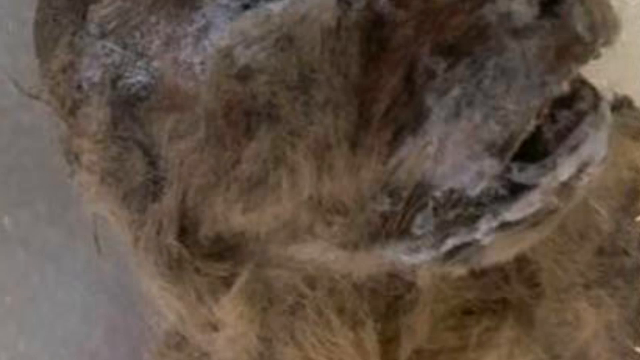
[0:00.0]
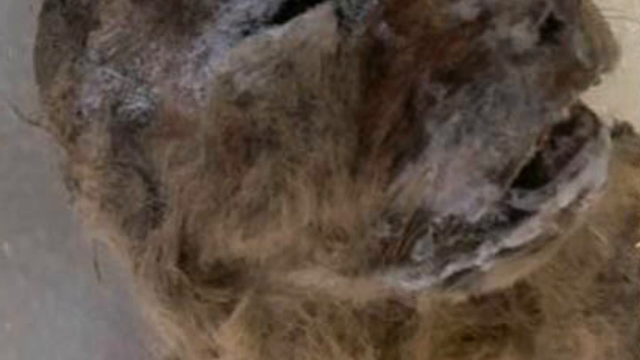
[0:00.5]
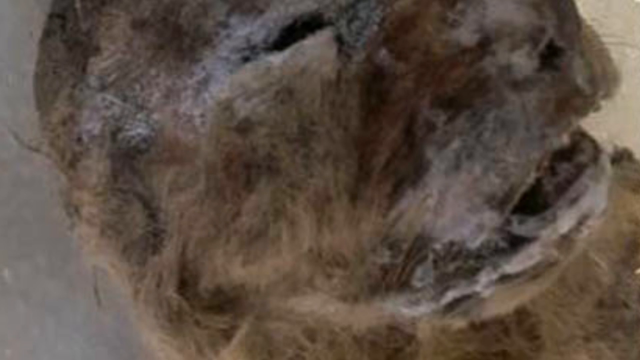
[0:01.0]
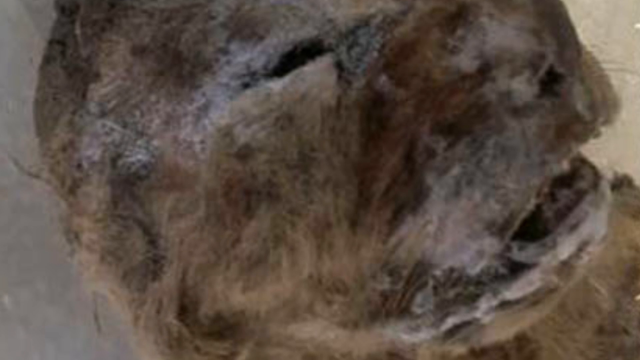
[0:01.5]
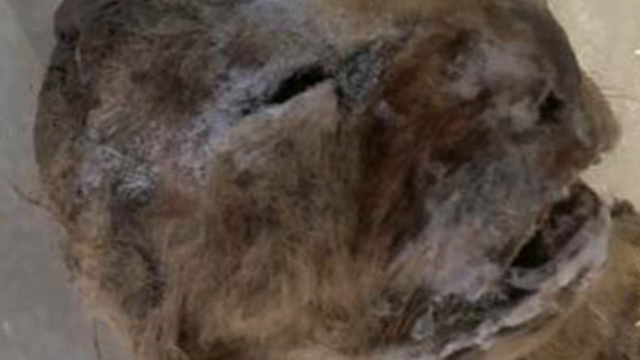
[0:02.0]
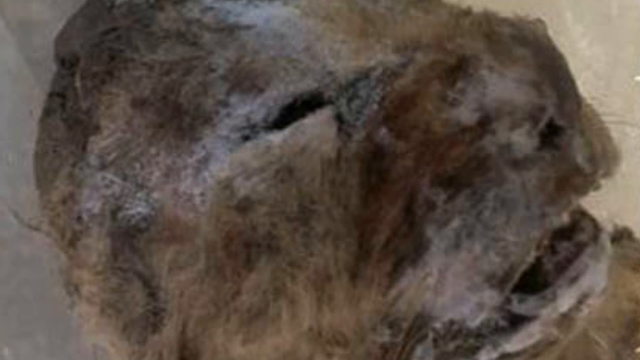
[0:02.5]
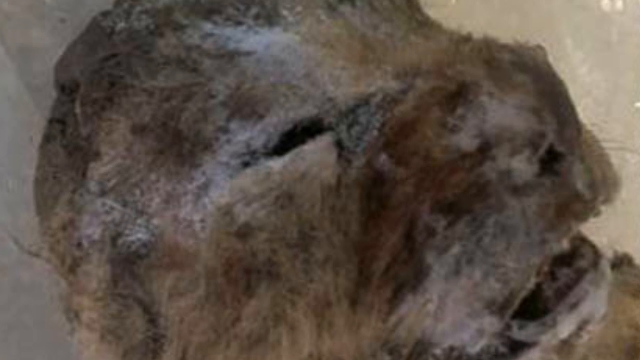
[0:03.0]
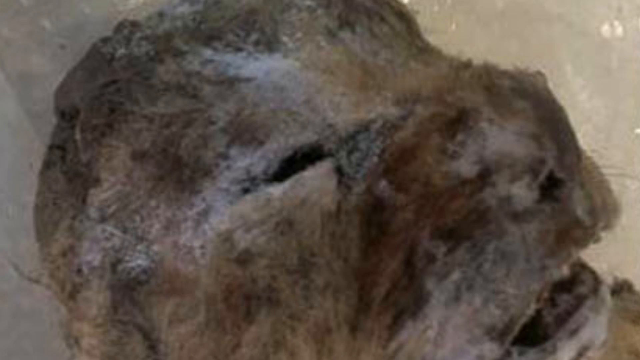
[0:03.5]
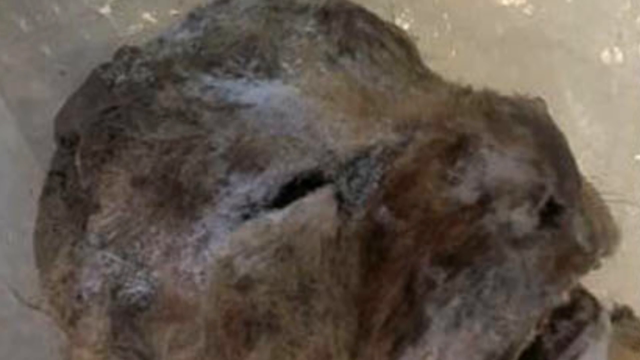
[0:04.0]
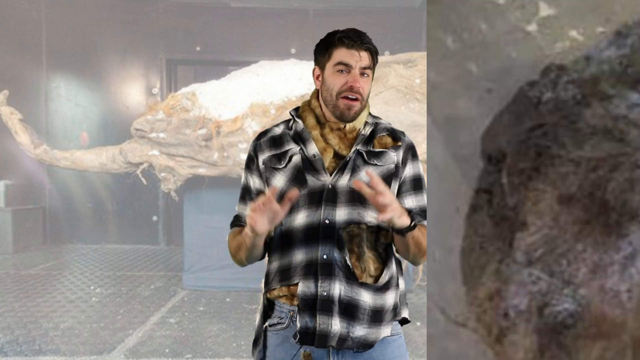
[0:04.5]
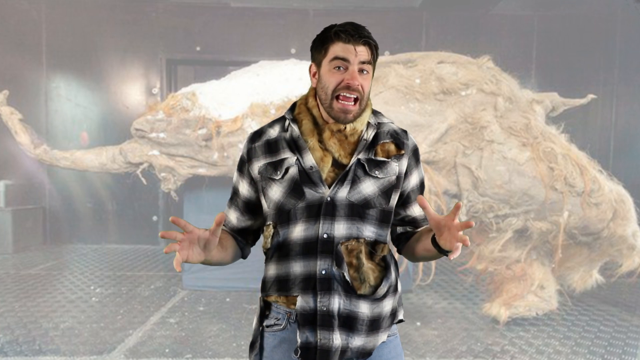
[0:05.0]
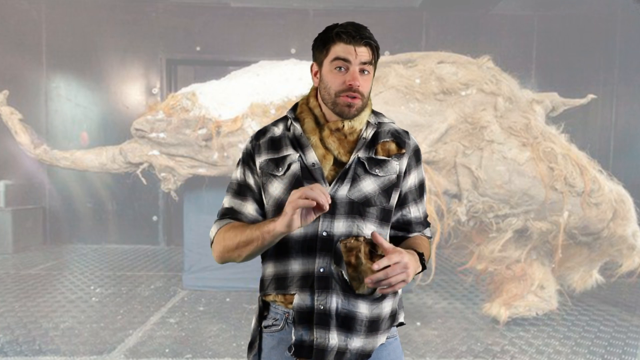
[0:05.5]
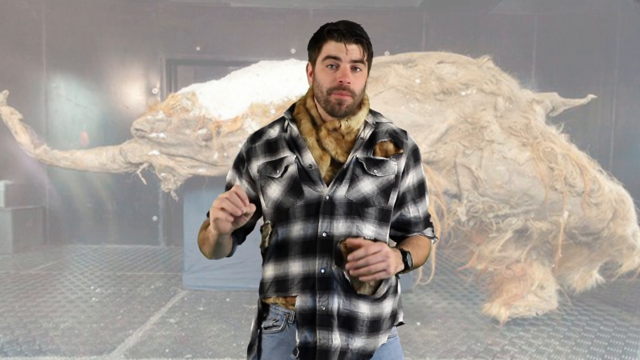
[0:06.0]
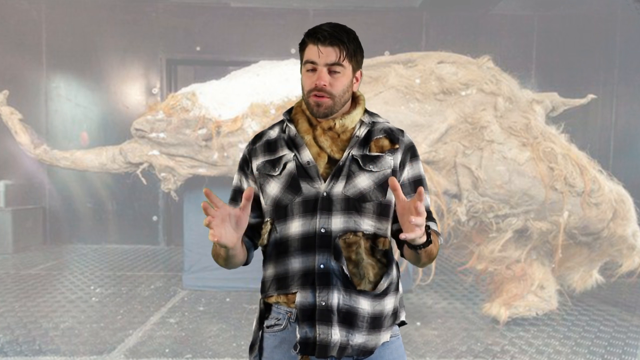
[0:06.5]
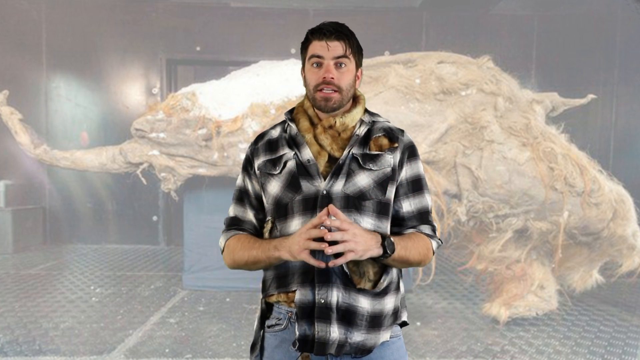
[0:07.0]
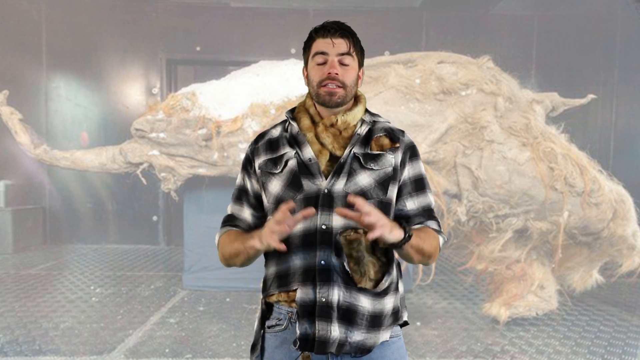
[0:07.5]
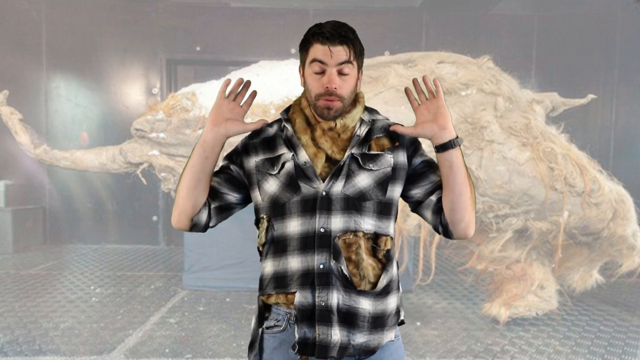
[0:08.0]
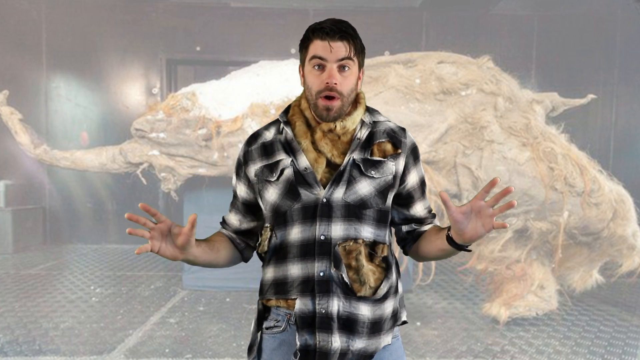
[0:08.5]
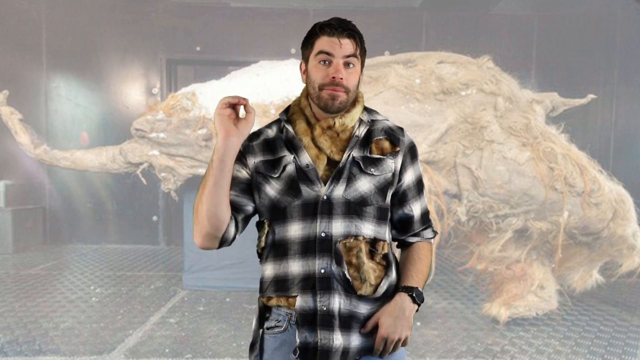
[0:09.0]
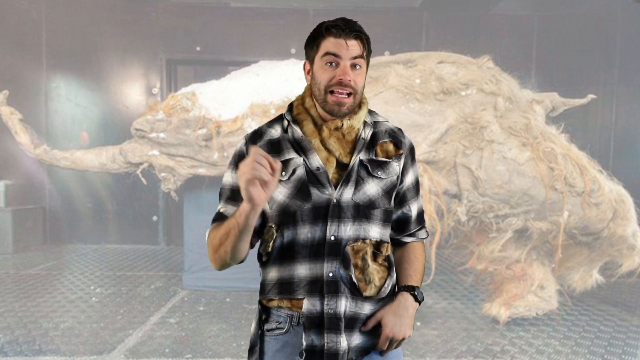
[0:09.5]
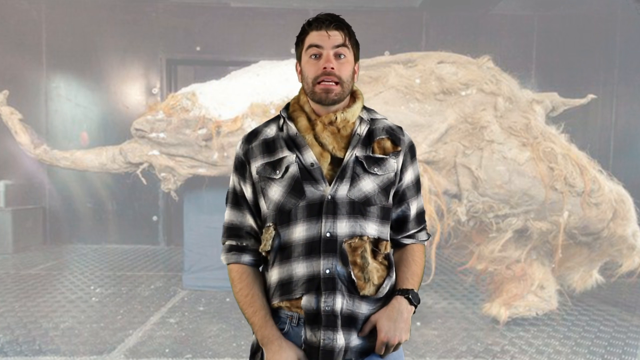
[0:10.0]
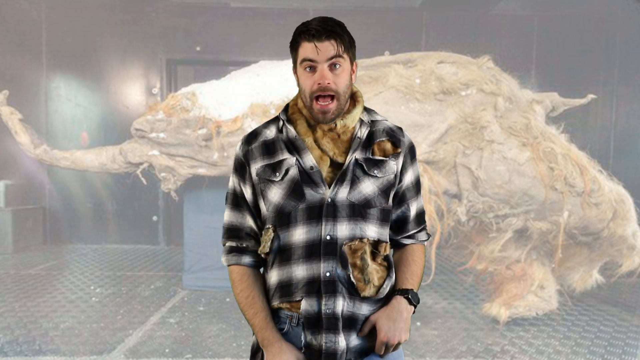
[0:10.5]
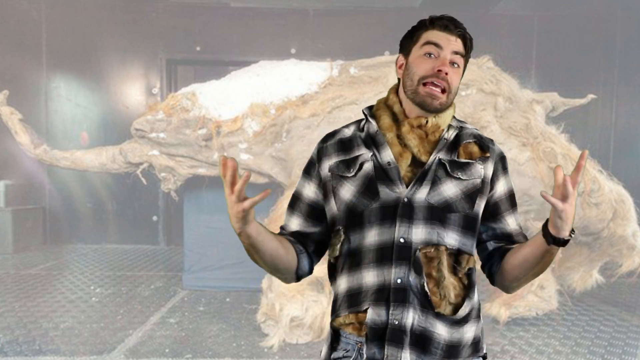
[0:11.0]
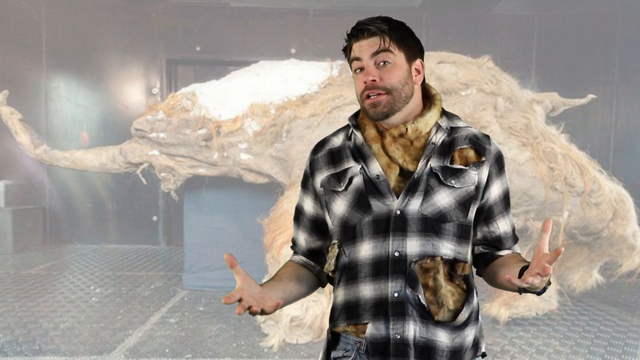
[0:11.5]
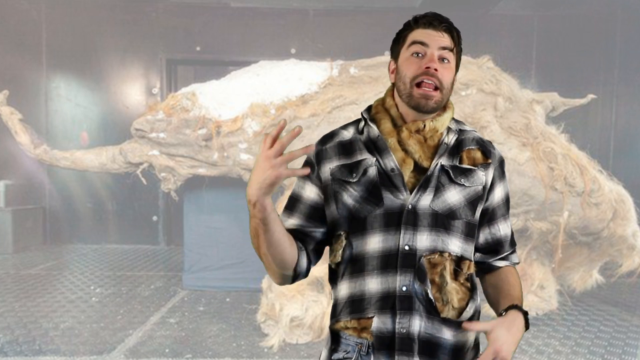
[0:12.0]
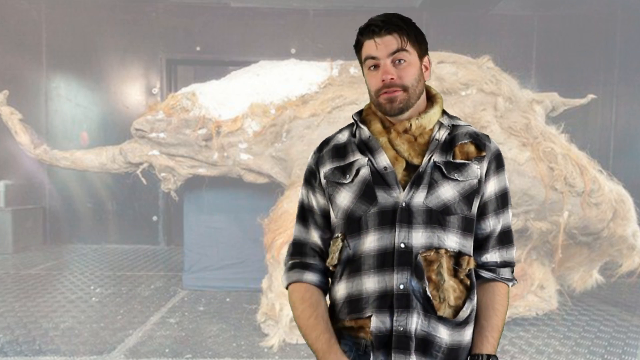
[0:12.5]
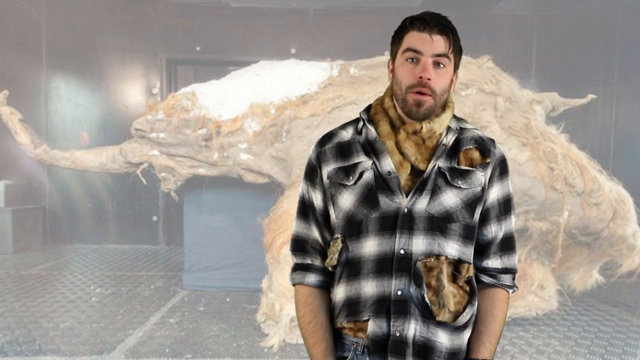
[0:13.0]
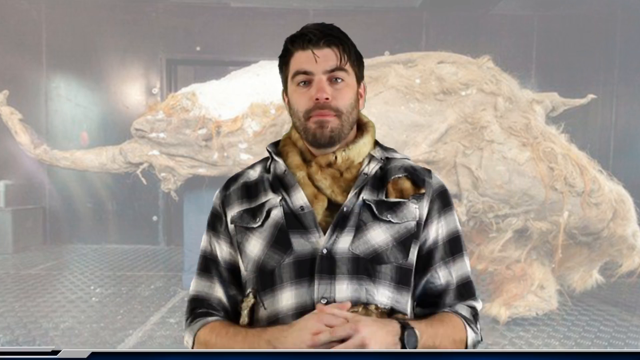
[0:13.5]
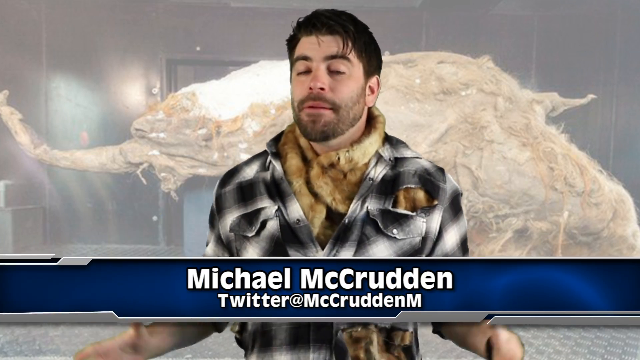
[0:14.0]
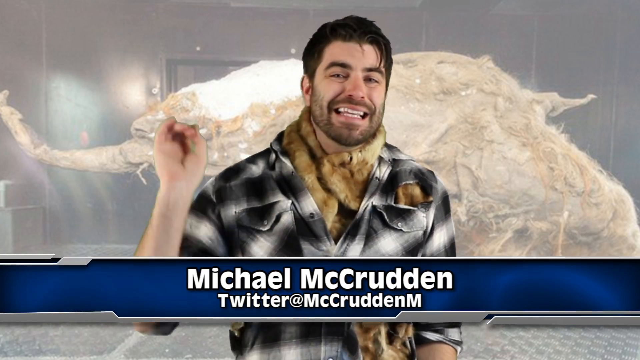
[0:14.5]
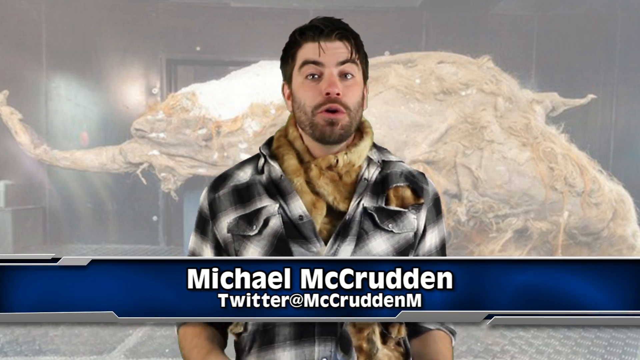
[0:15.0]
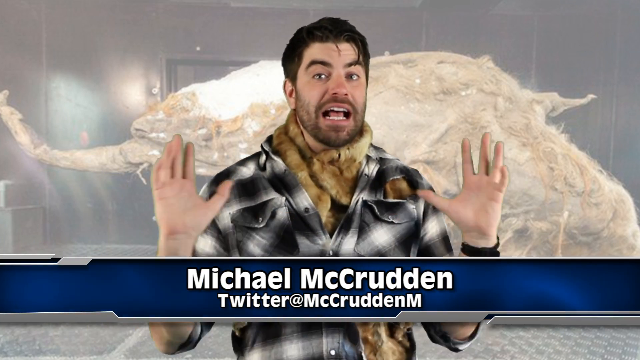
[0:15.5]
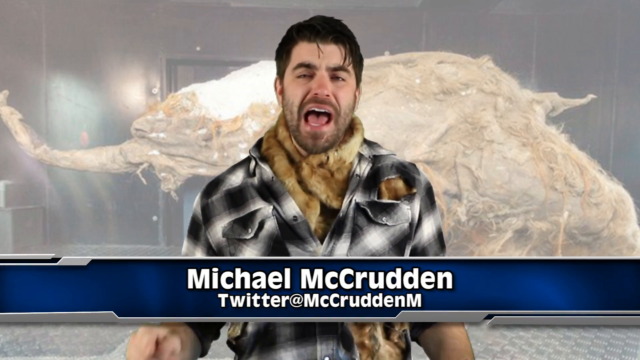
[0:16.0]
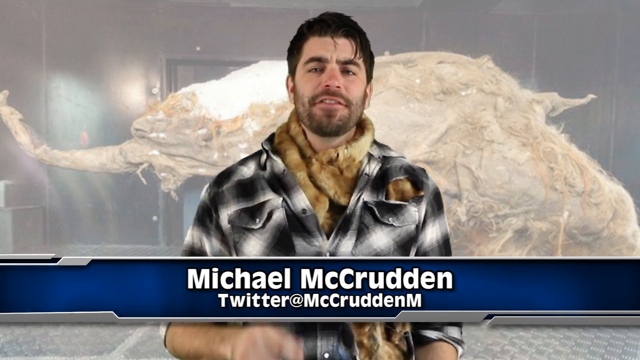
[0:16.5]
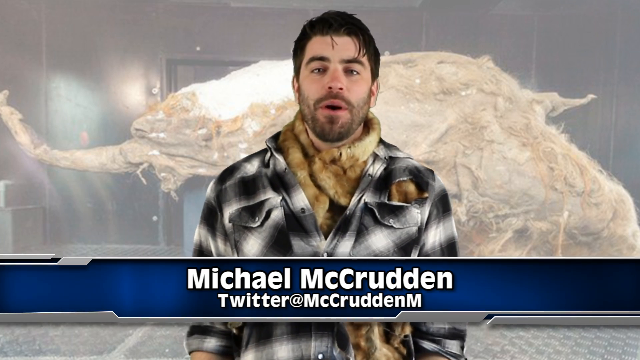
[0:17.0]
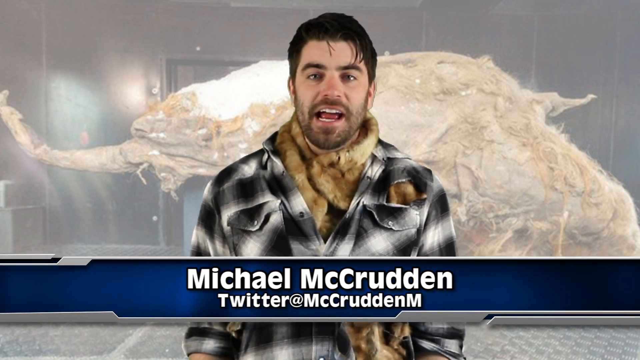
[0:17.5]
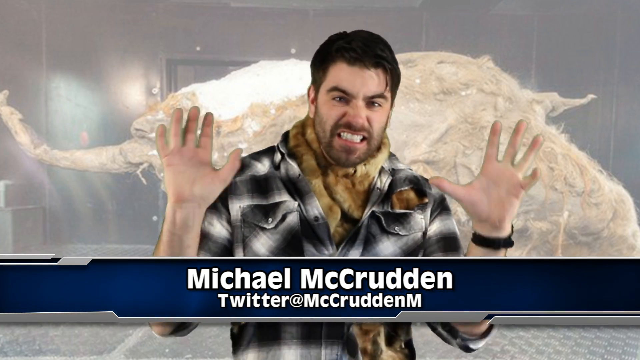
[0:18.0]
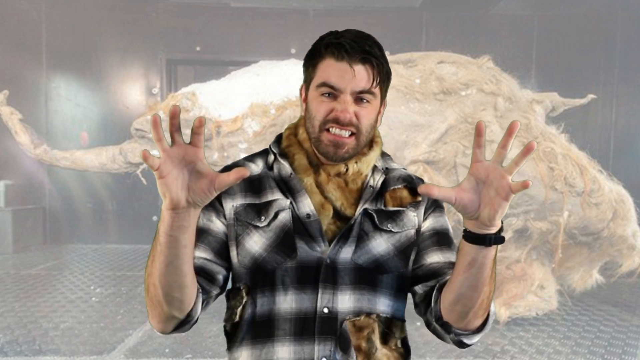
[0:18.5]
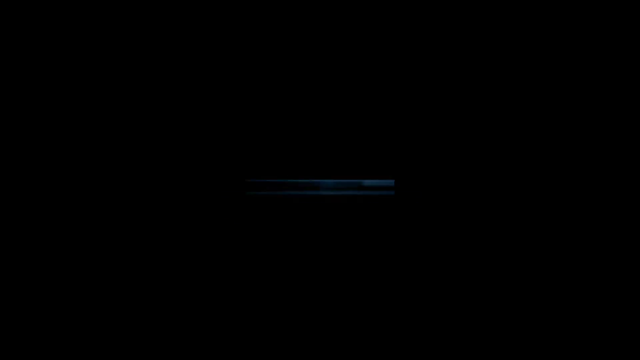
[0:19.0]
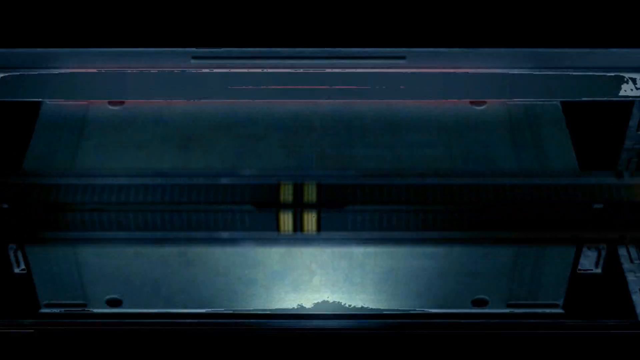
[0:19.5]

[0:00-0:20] The video shows what appears to be a prehistoric animal, something like a saber-toothed tiger, or something that almost resembles a cat. A man in the foreground wears a white and black checkered shirt with a couple of tears through which his undershirt is visible; the undershirt is a dirty, dingy tan color and looks like it hasn't been washed. Behind him is the animal, completely mummified. He has black hair, white skin, a very closely trimmed beard and a mustache. He uses a lot of hand gestures as he talks. A blue banner pops up showing his name, "Michael McCrudden", with his Twitter handle at the bottom of it. Shortly afterward he holds his hands out as if he is about to kiss something.